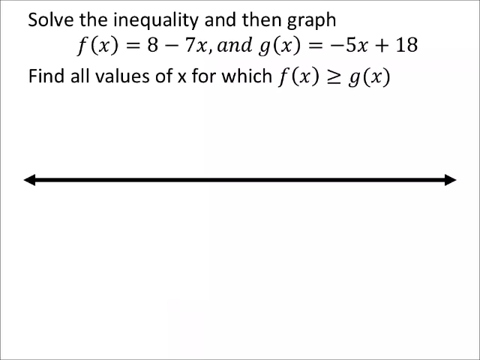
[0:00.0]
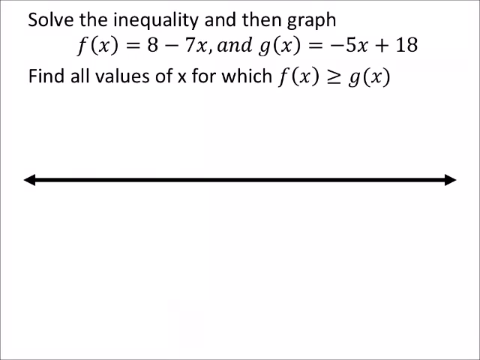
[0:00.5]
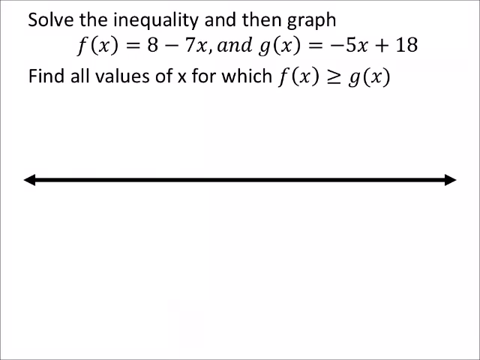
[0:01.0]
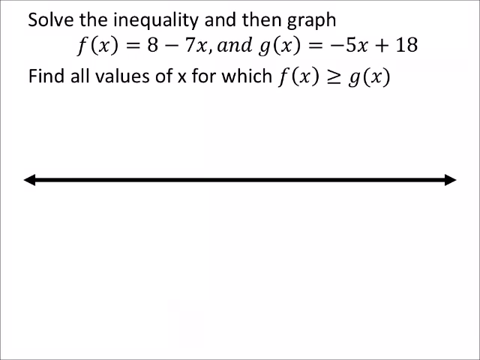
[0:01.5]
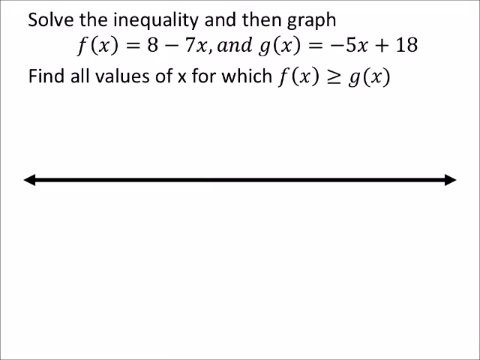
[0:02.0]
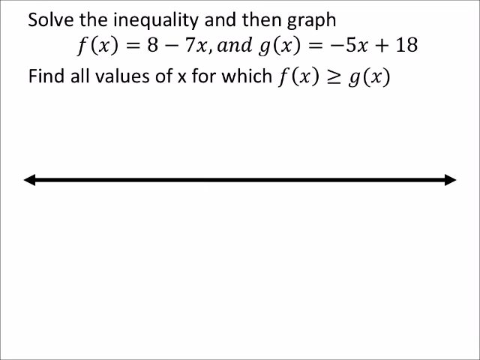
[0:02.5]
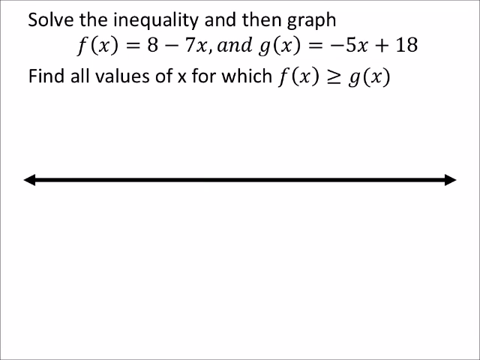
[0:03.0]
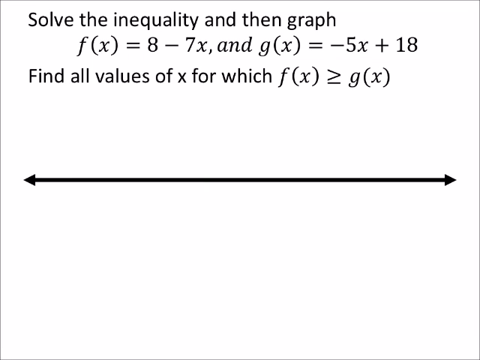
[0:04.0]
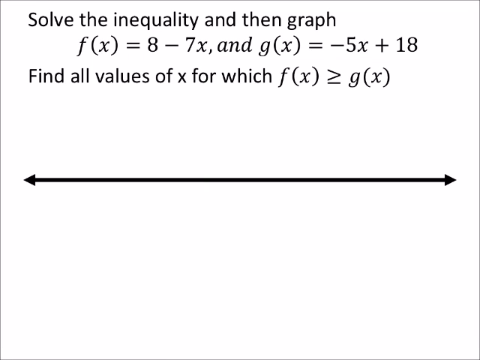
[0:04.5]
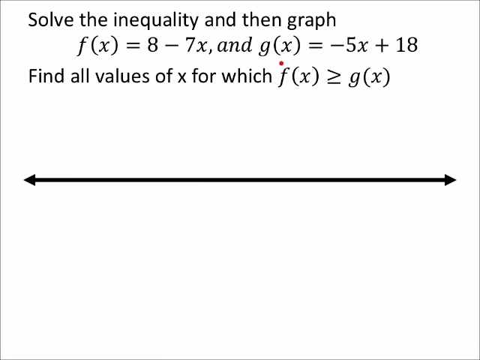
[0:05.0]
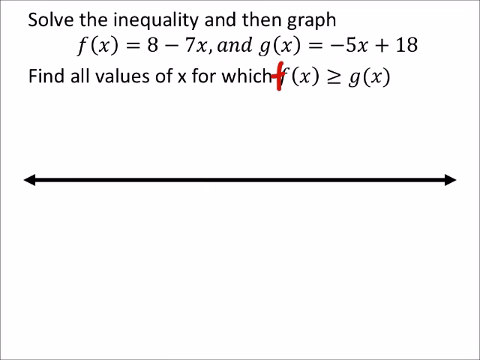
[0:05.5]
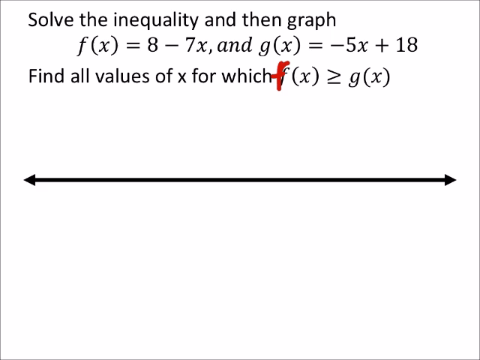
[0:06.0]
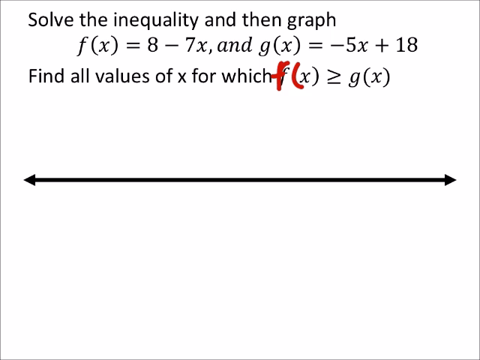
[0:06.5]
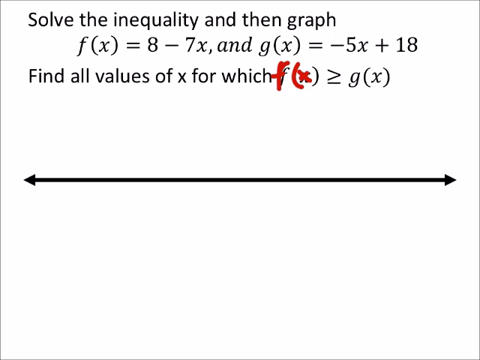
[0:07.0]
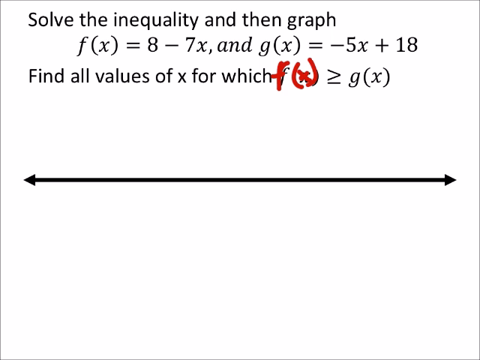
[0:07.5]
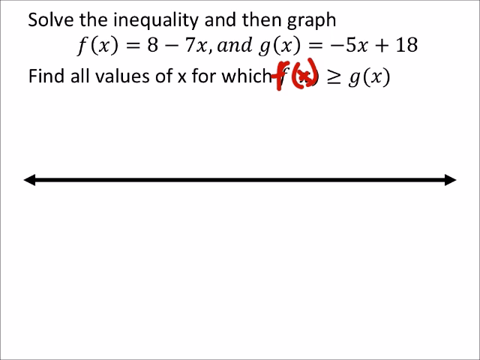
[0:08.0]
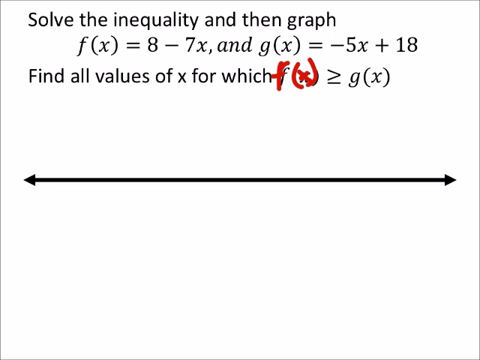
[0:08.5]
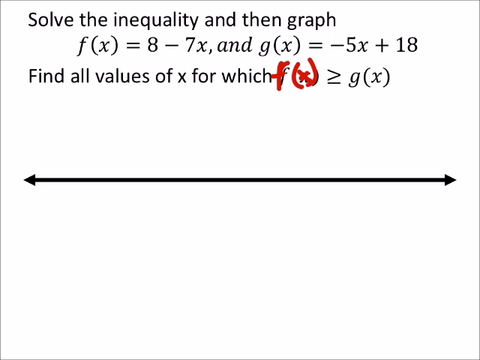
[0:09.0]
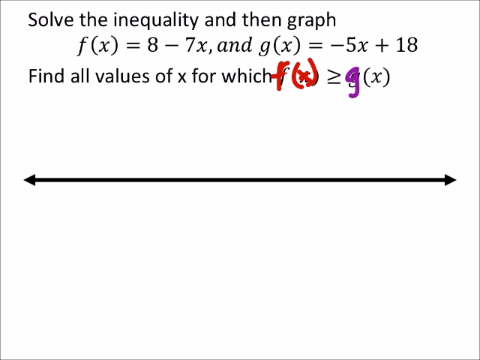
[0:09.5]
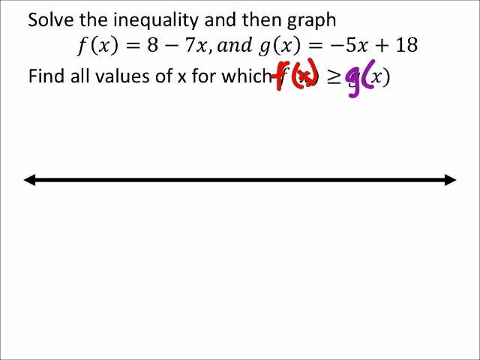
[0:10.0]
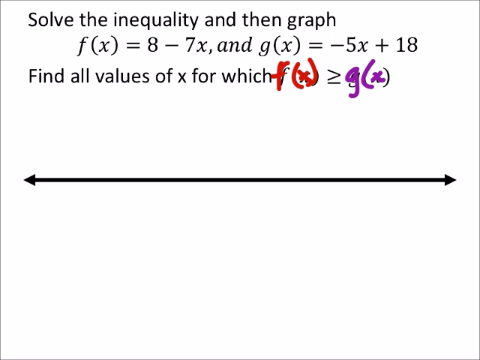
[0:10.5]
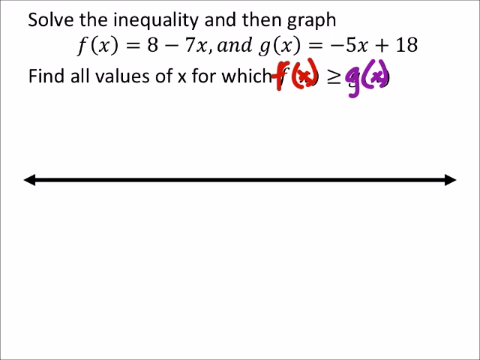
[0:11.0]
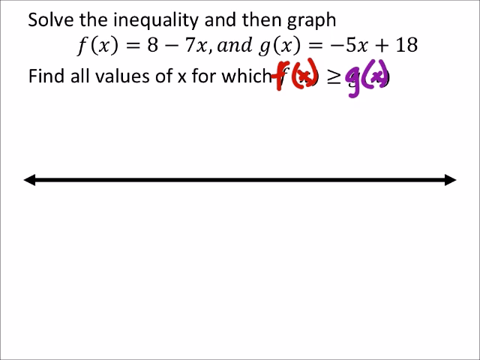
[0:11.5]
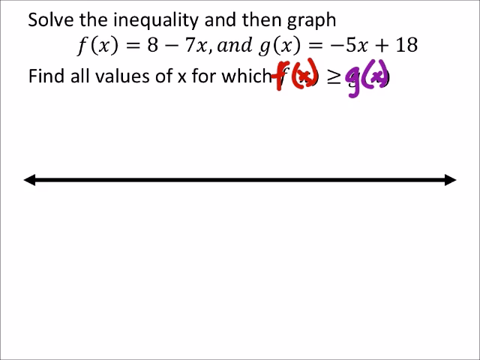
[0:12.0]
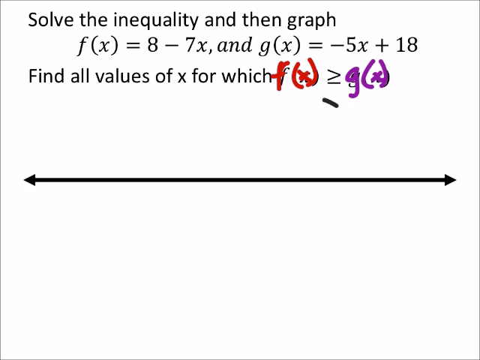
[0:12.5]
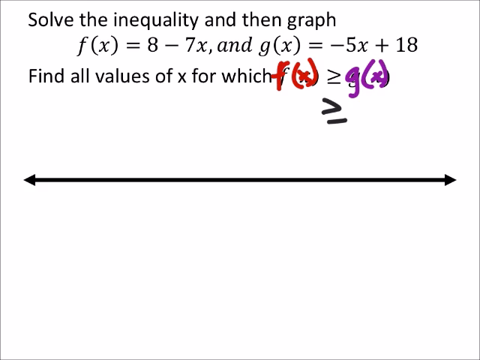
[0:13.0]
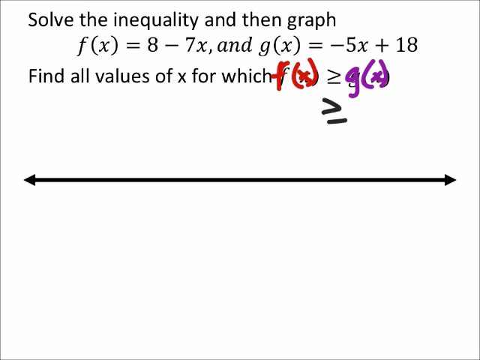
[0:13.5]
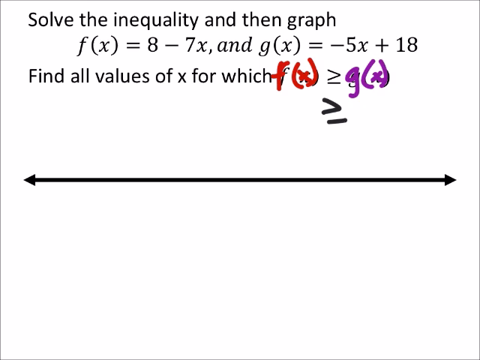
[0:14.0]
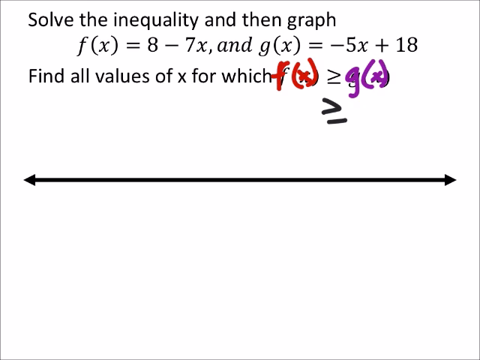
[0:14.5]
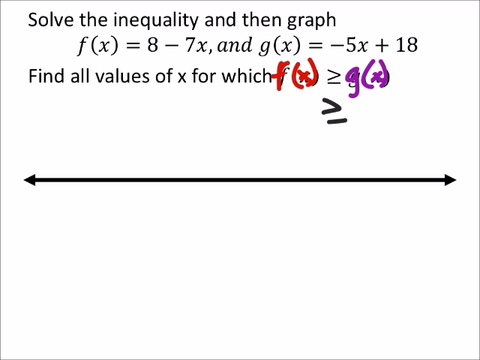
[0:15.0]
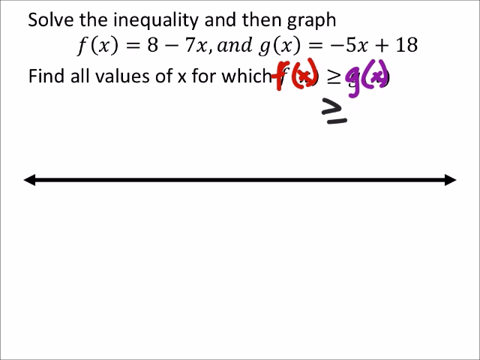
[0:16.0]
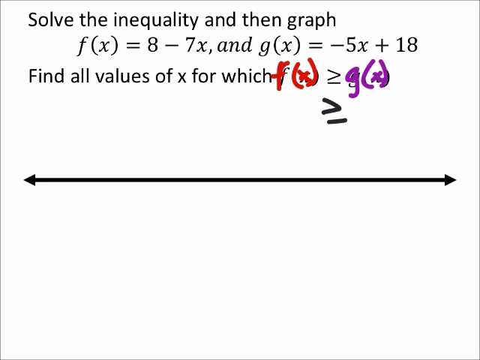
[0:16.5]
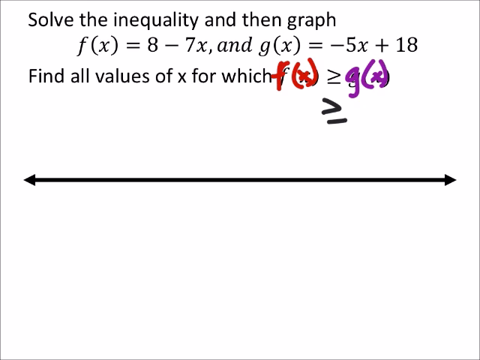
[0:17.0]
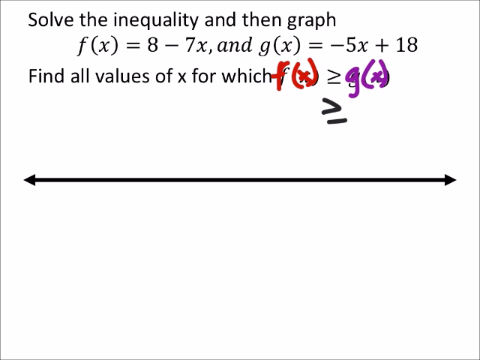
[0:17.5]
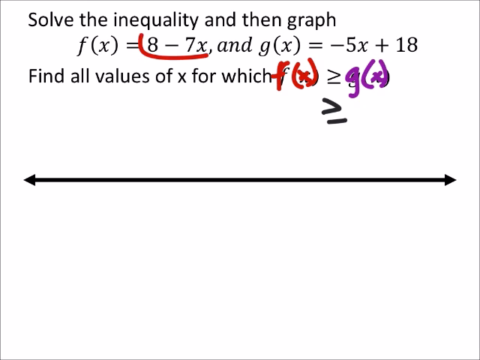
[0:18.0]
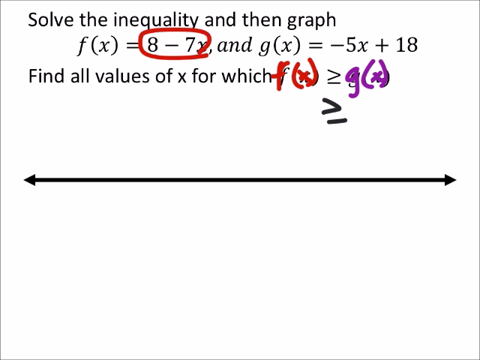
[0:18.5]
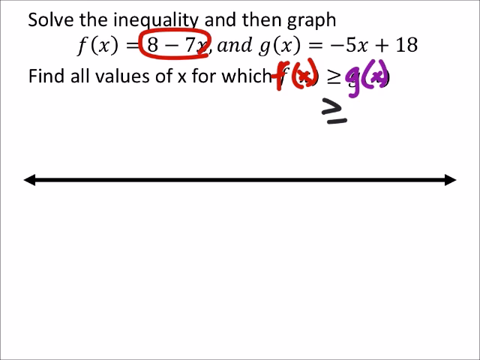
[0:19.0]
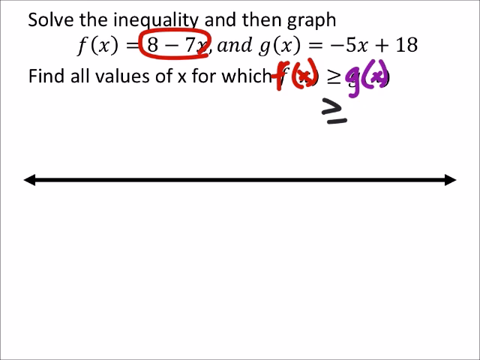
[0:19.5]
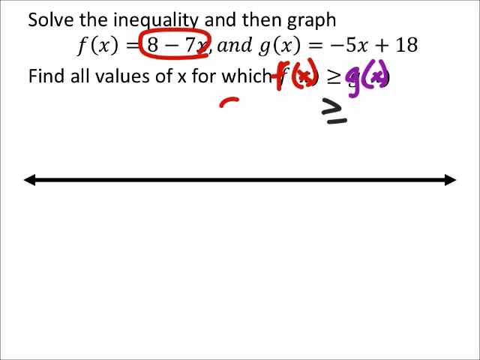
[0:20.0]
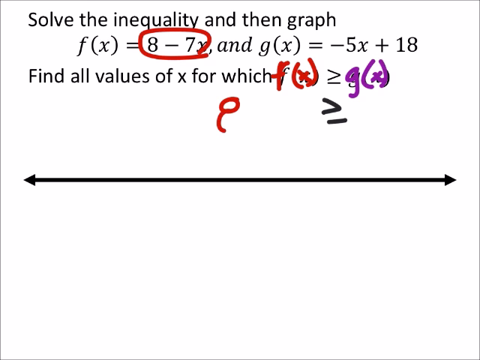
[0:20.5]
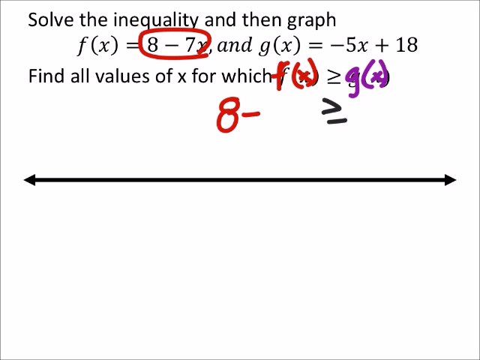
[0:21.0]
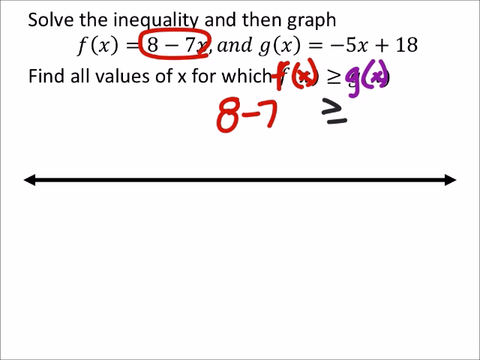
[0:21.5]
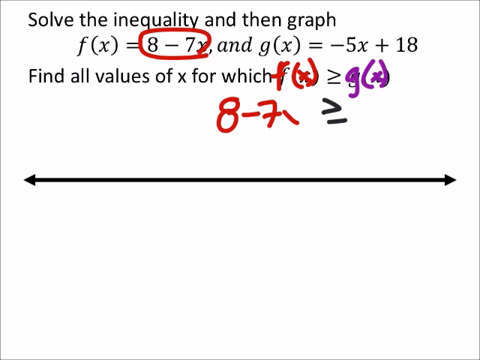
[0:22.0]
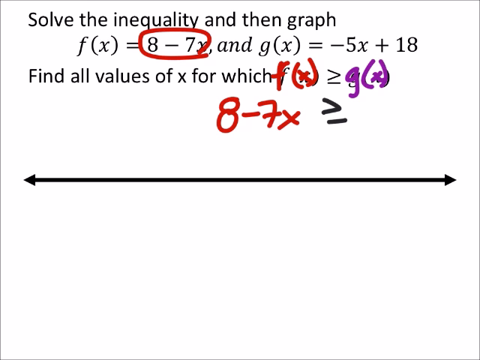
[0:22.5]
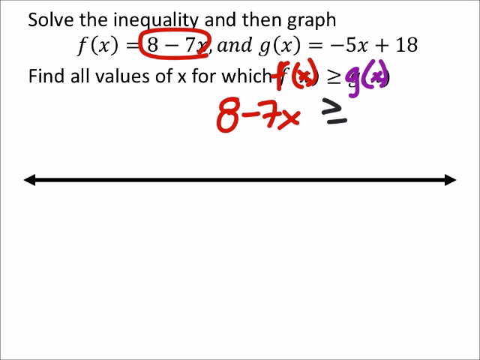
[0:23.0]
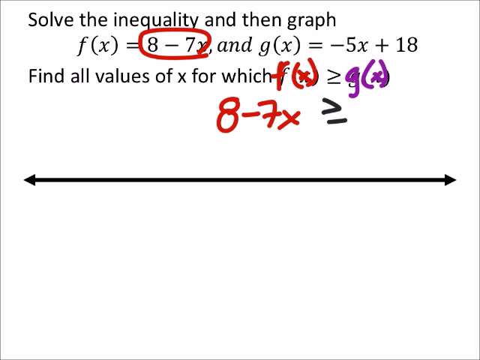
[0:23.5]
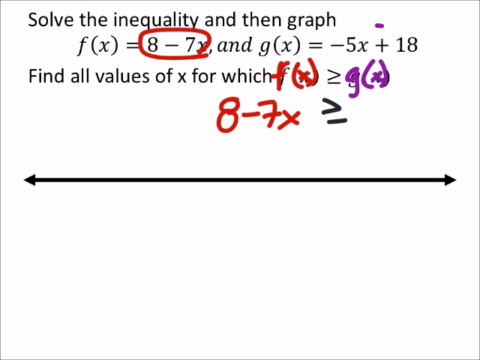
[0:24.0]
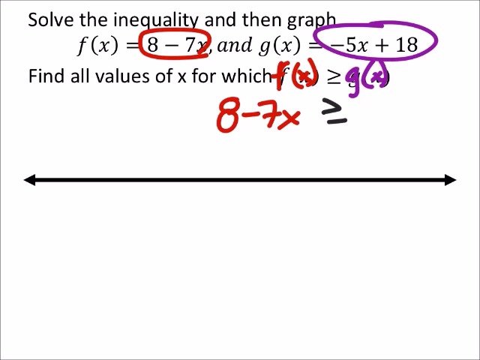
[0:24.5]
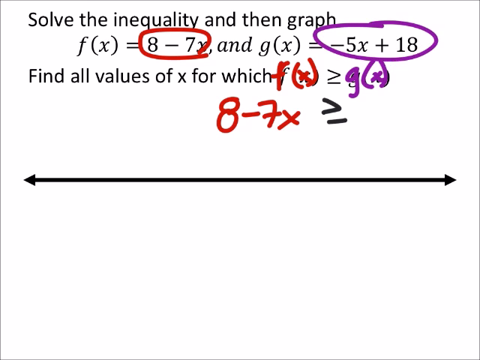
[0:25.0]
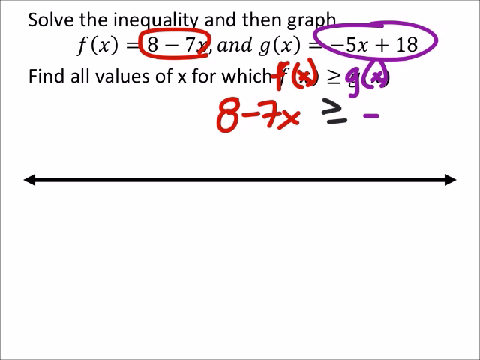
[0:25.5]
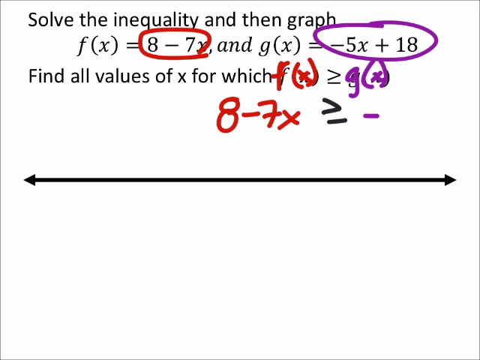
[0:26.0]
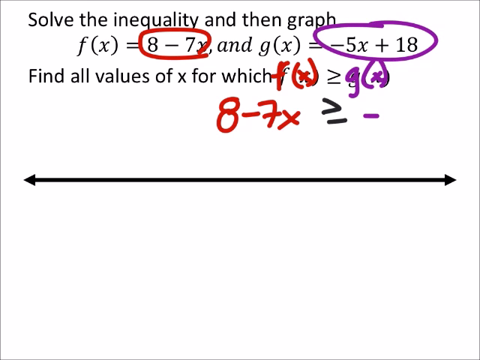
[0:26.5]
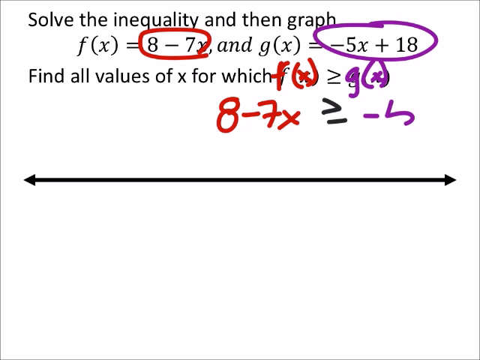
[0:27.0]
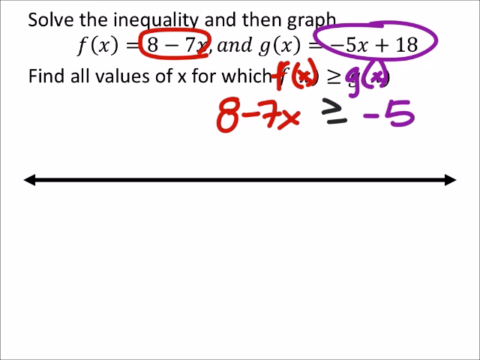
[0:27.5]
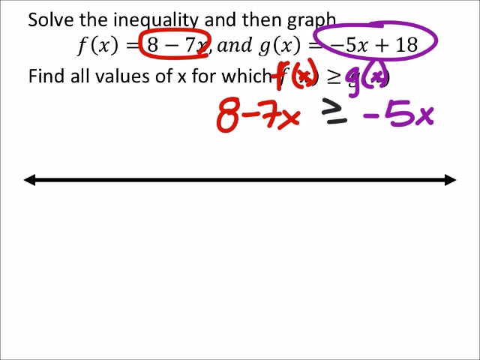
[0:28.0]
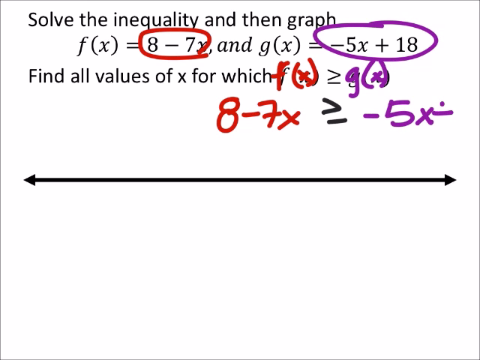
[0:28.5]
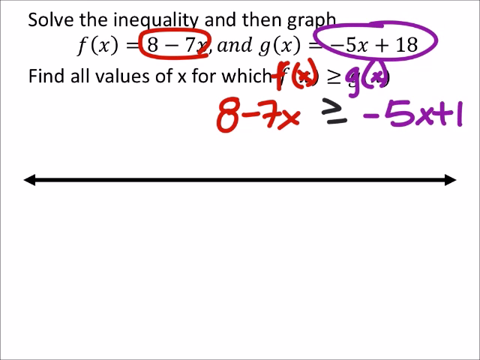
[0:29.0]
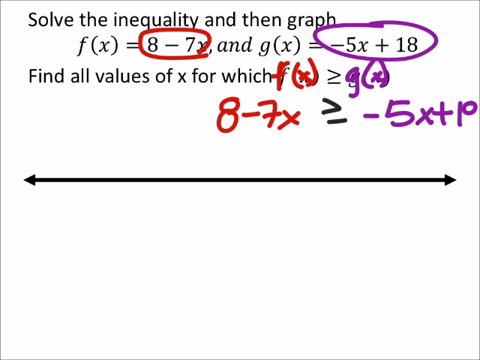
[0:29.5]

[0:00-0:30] The video opens on a white screen, and a black arrow goes from the left side of the screen to the right side. At the top, black text reads "solve the inequality and then graph." Below that is an equation, and below the equation are the words "find all values of x for which" with another equation to the right. The screen stays unchanged until about halfway through, when writing begins: a red outline is drawn with a marker on top of the bottom equation. The left side of what is drawn is red, with "FX" in red, and on the right side is "GX" in purple. The 8-7x in the top left of the equation is circled with a red marker, and 8-7x is written below the text in red. The top right of the equation, minus 5x plus 18, is circled with a purple marker, and minus 5x plus 18 is written in purple at the bottom of the equation being drawn.